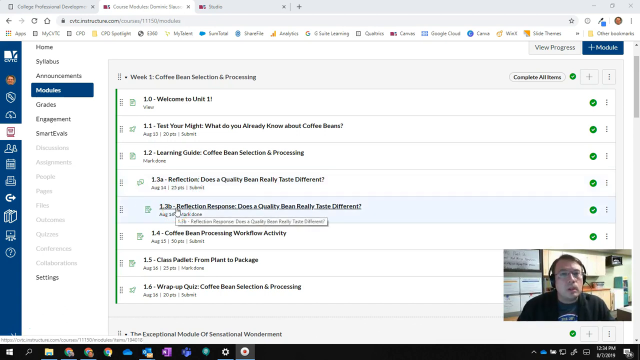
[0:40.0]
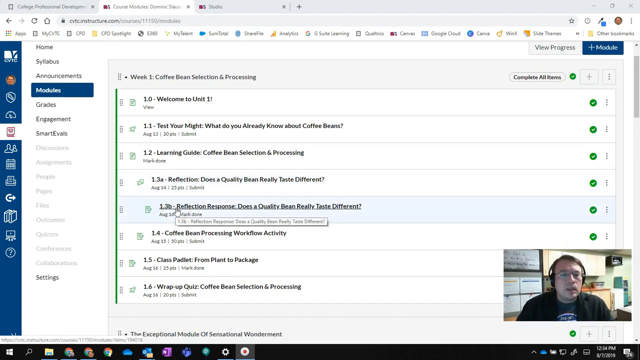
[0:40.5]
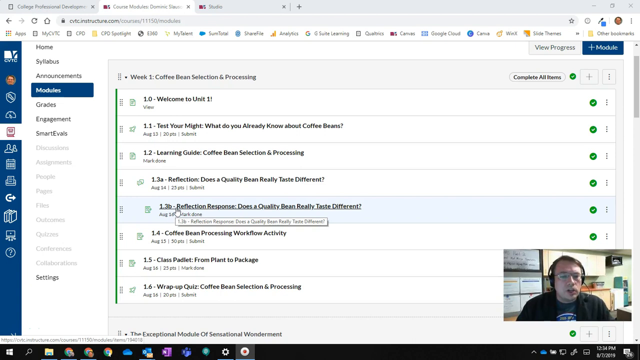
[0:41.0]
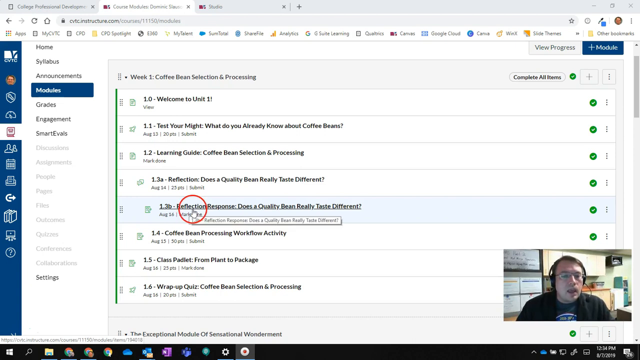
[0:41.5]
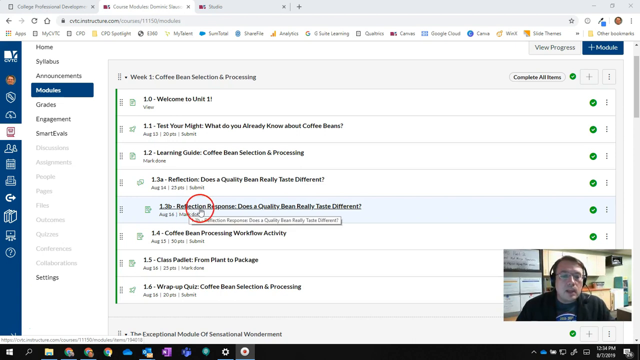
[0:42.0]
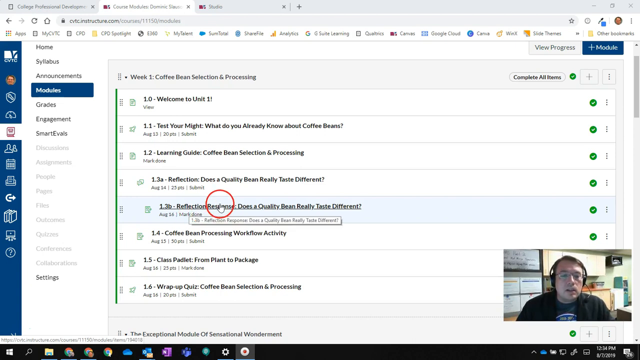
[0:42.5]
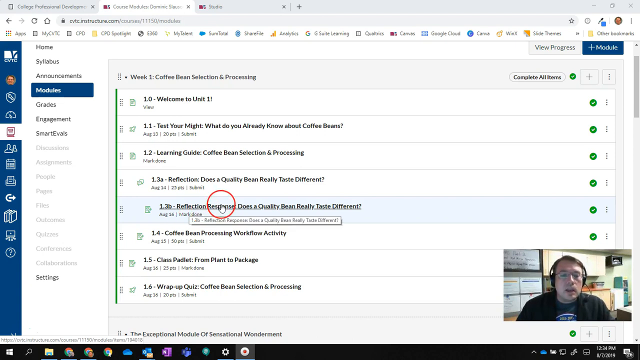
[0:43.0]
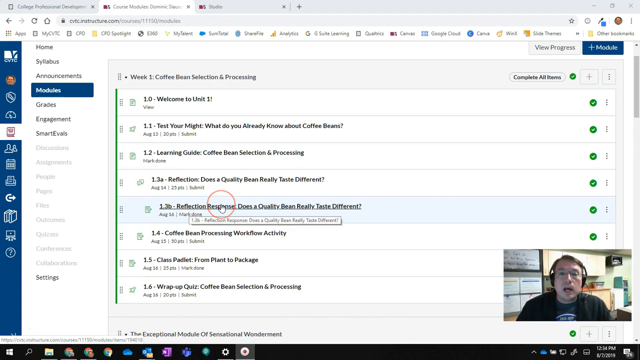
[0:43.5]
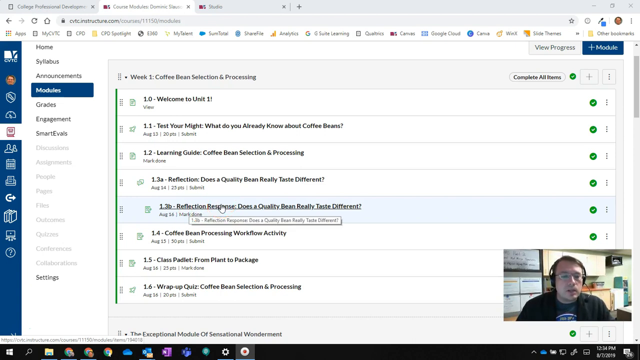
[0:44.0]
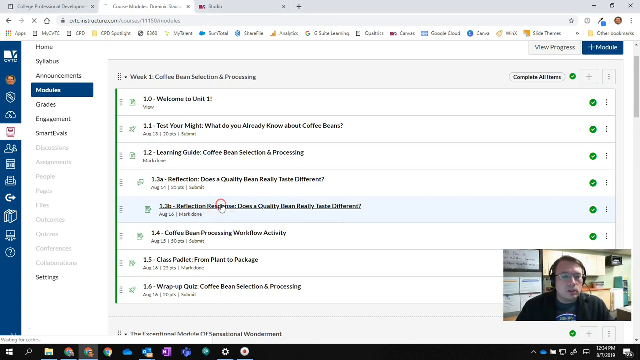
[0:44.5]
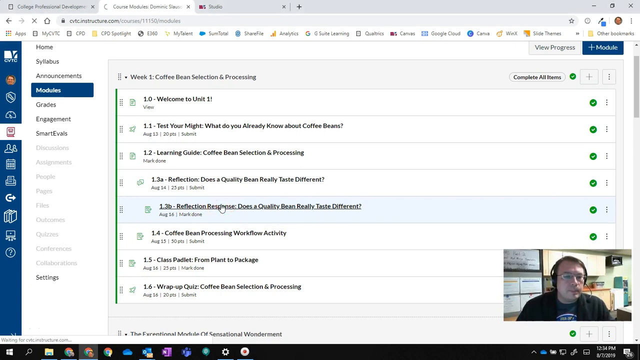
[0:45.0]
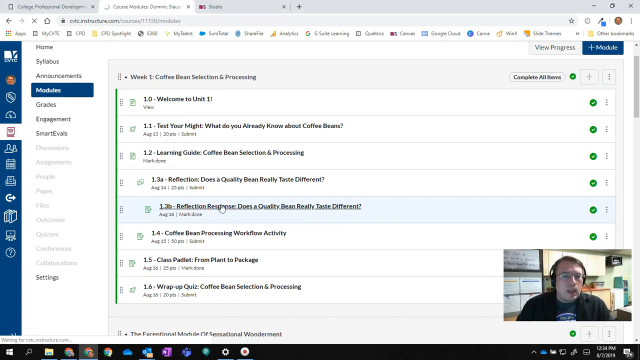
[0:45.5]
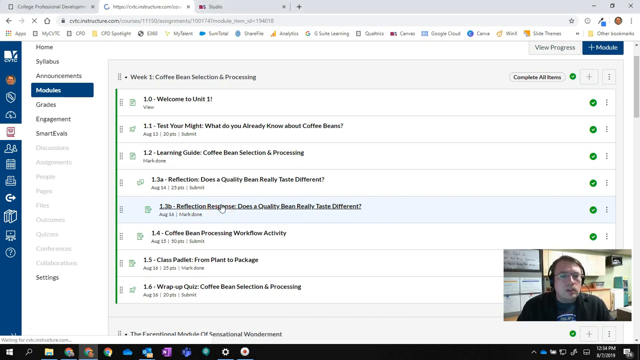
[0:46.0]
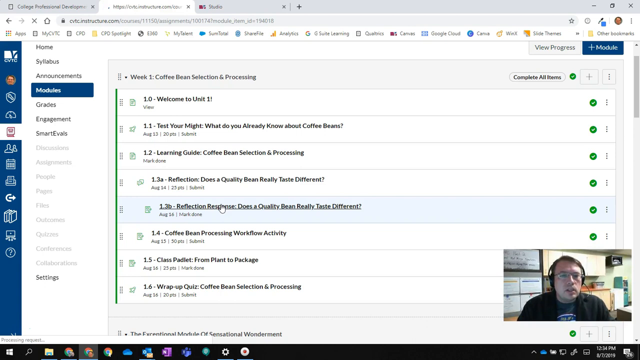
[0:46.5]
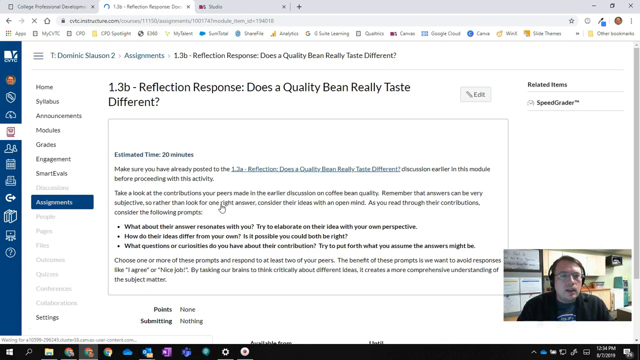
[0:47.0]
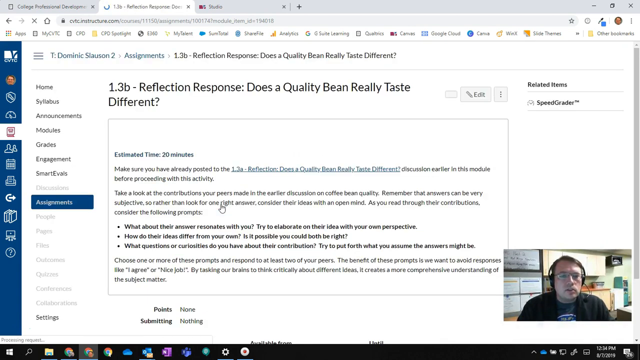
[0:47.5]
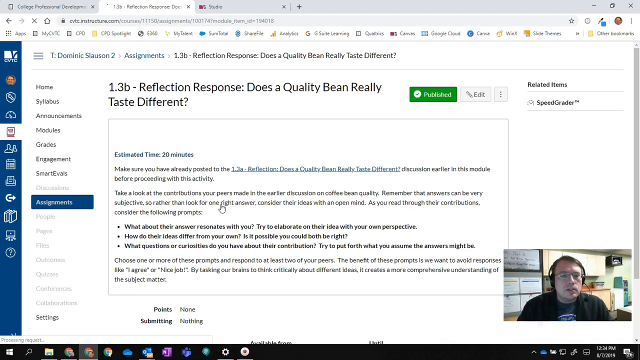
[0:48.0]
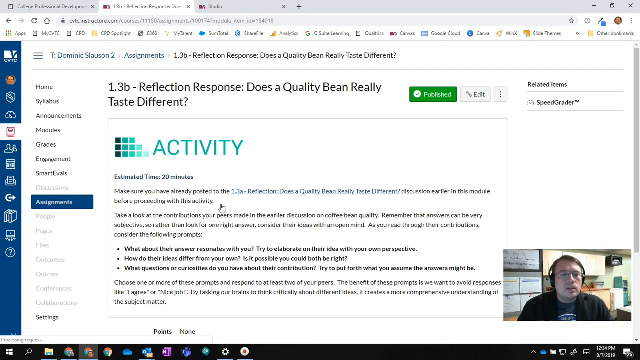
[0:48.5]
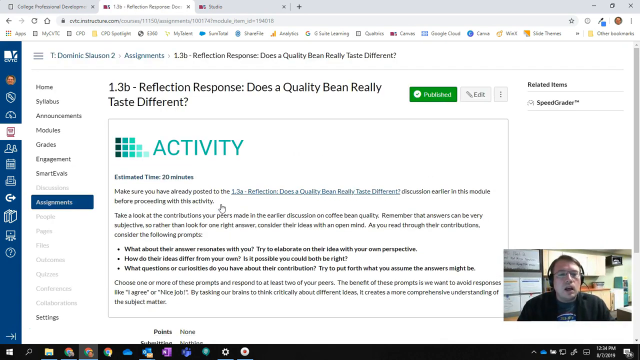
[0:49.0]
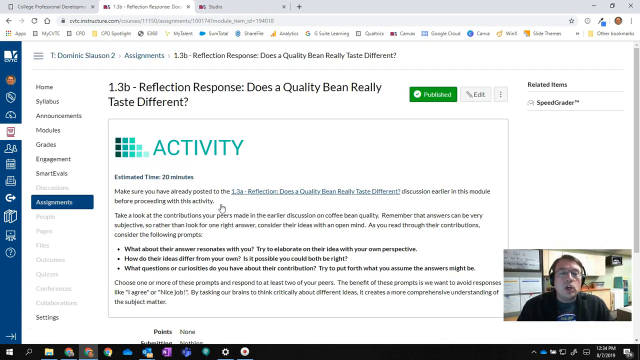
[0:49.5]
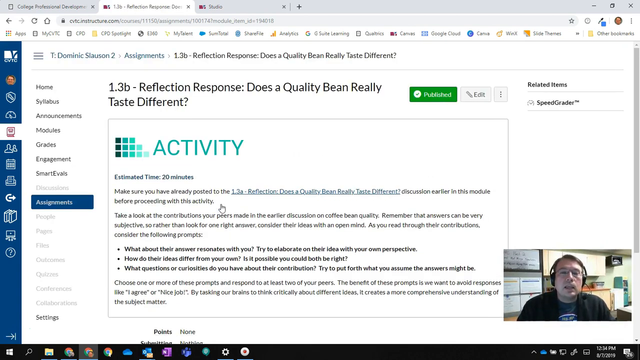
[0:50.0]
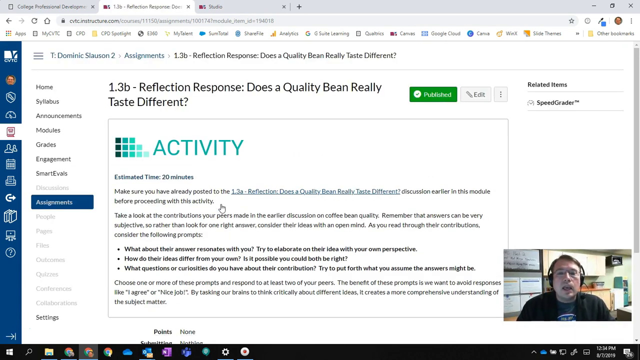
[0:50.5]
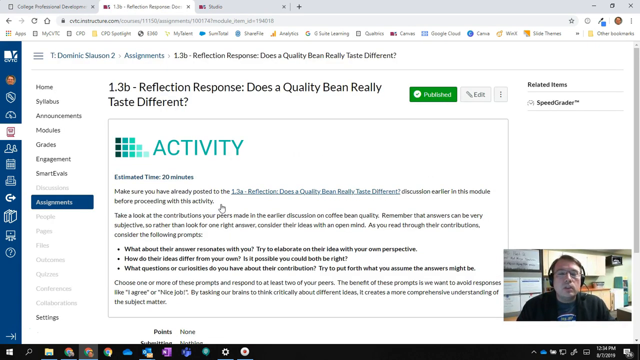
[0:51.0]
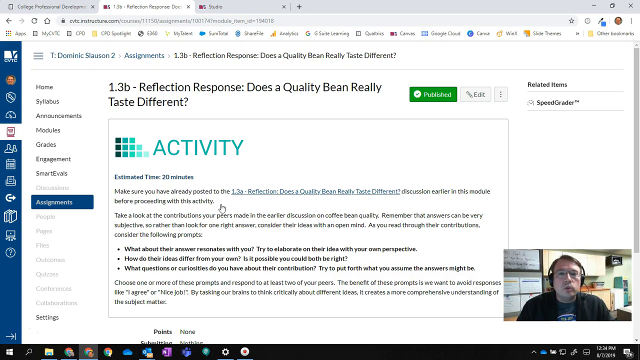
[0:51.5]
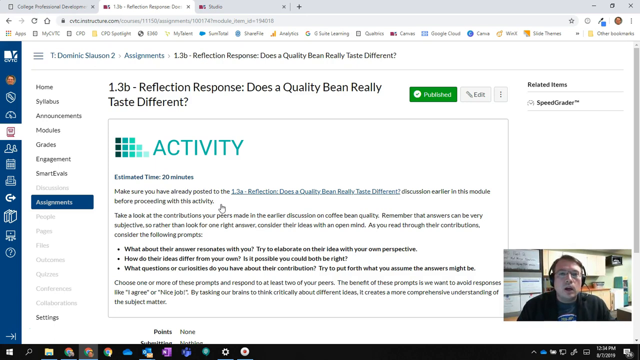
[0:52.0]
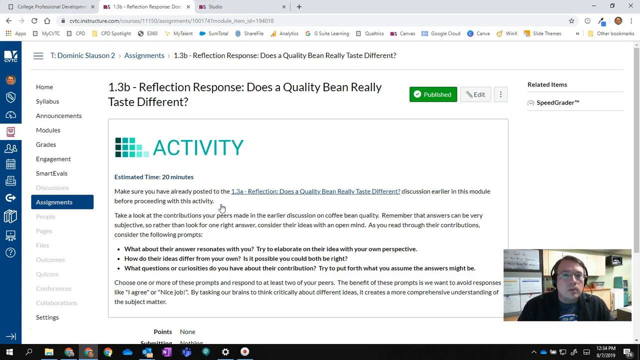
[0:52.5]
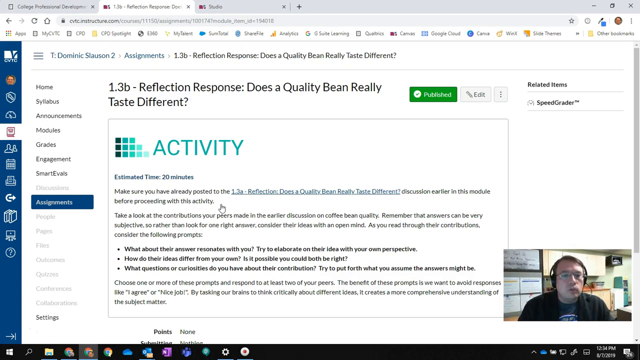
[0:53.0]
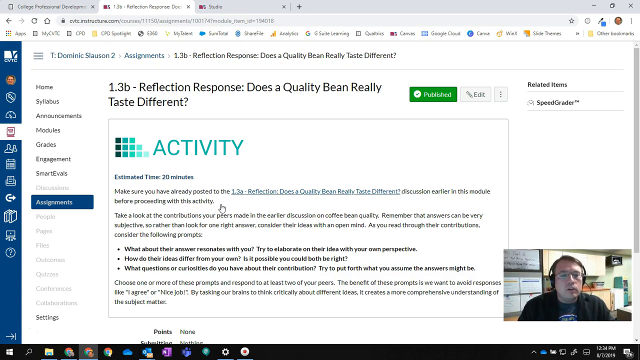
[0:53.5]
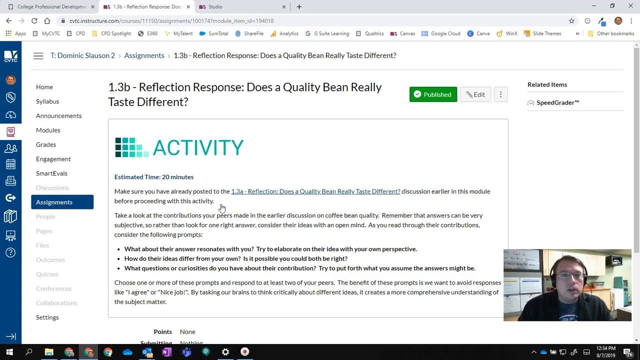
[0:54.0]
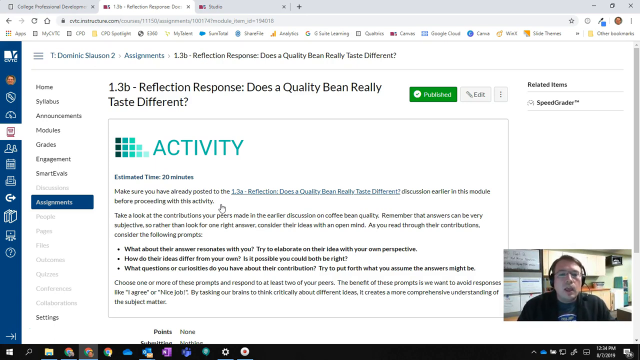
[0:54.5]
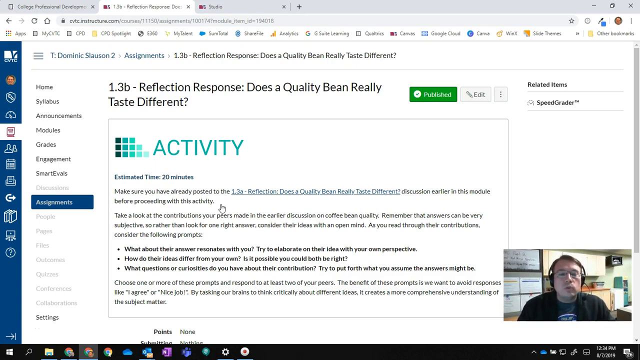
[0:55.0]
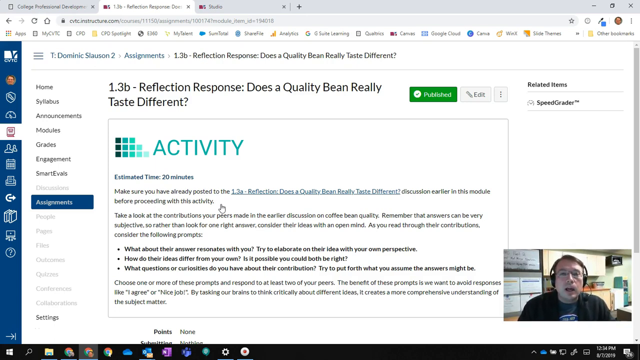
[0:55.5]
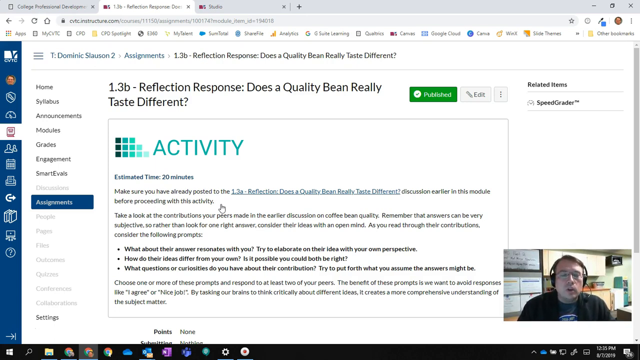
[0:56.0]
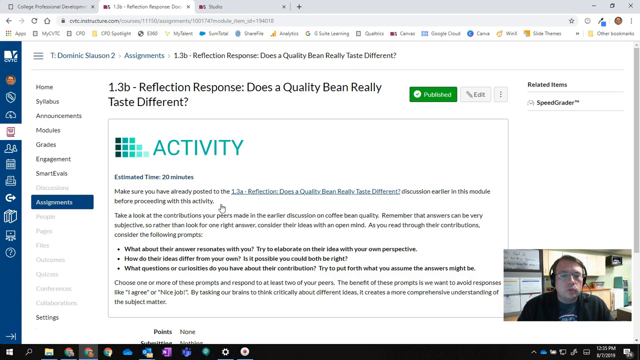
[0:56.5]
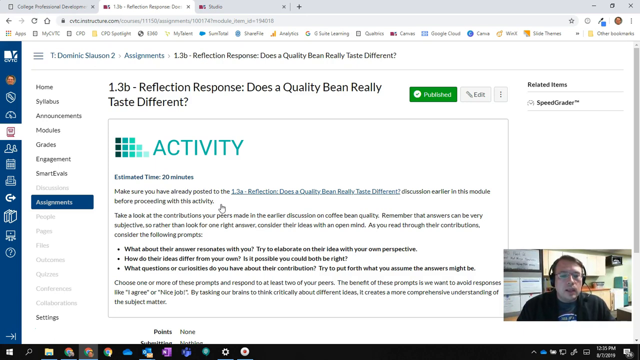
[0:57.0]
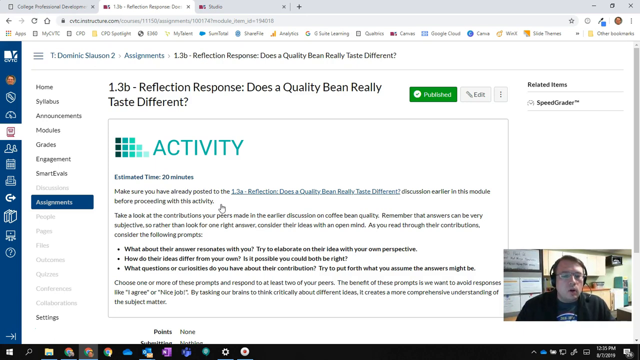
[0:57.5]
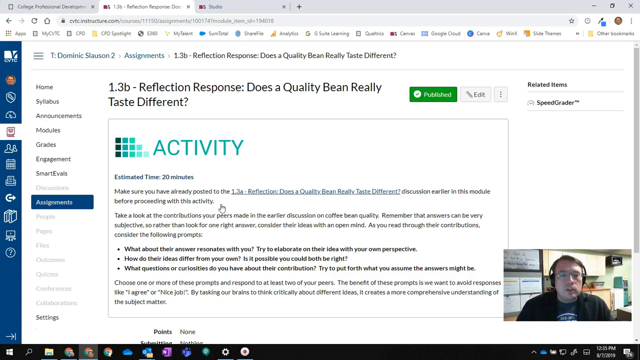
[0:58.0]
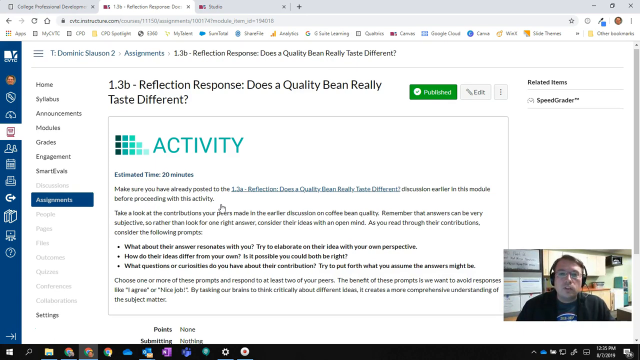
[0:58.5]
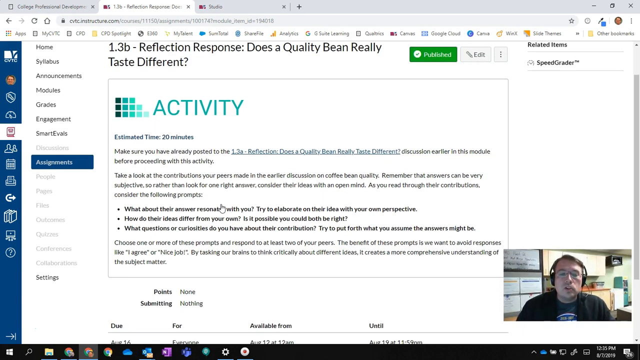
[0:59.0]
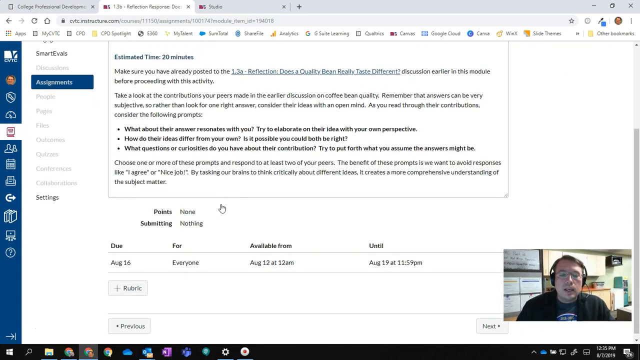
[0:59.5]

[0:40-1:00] A man at his desk records a video, introducing himself; he seems to be an online tutor. He shares his screen and highlights the parts he is talking about. Items on the PC screen are labelled like 1.0 and 1.1. On the left side of the screen is a menu highlighted in navy blue. The man appears in the corner while the screen is shown. He goes to a second page labelled activity, apparently the activity part of a project, and scrolls down the page.